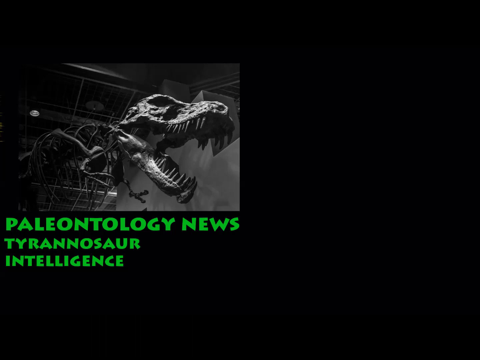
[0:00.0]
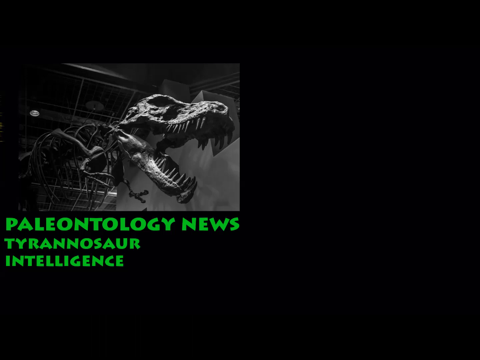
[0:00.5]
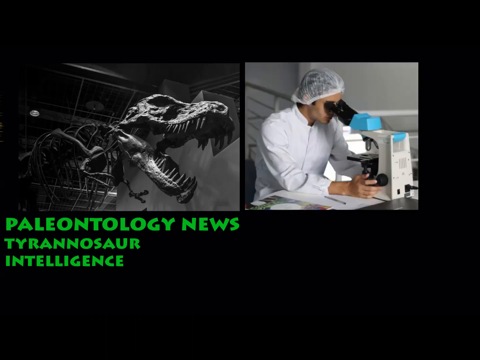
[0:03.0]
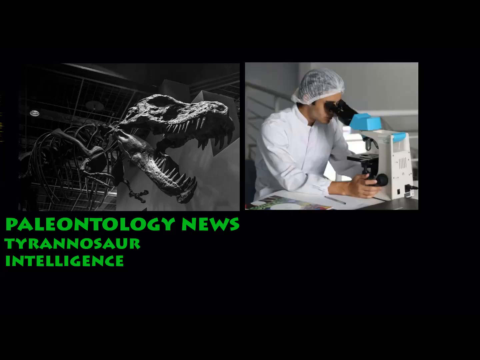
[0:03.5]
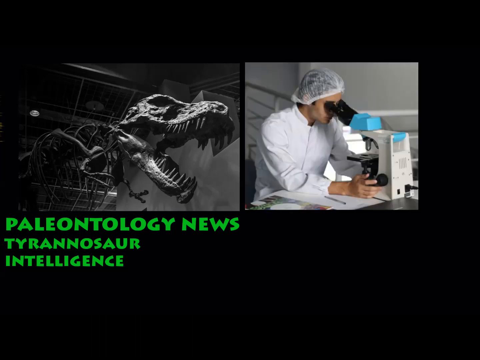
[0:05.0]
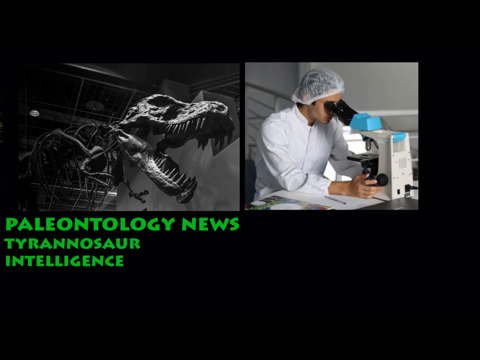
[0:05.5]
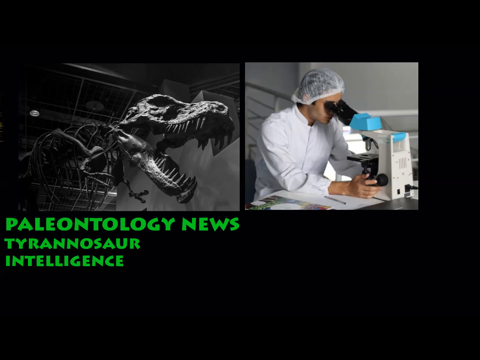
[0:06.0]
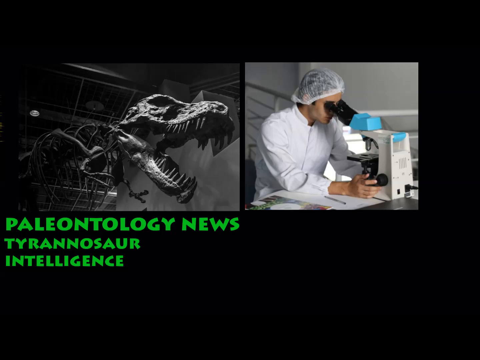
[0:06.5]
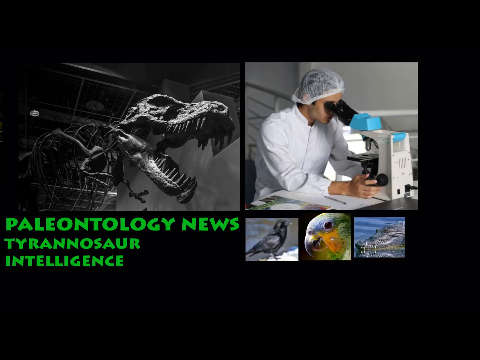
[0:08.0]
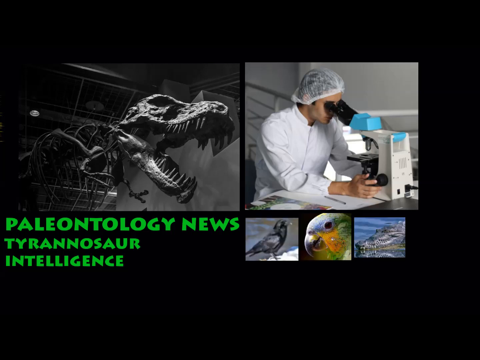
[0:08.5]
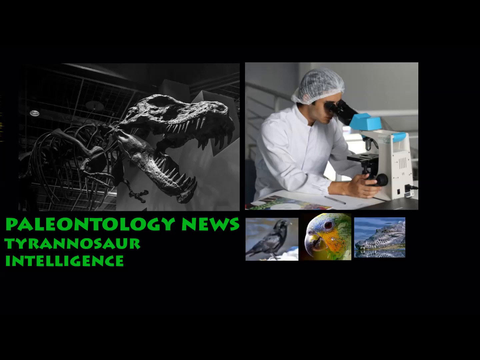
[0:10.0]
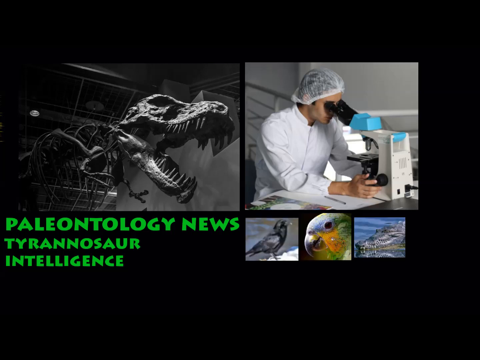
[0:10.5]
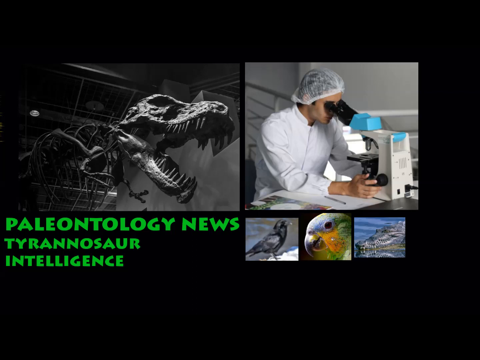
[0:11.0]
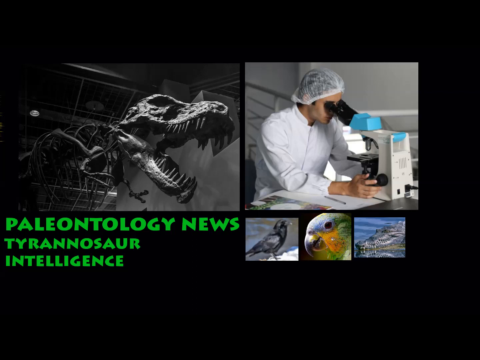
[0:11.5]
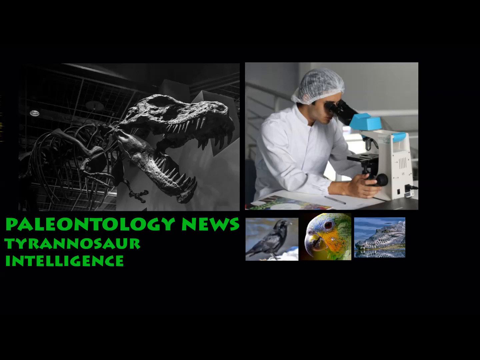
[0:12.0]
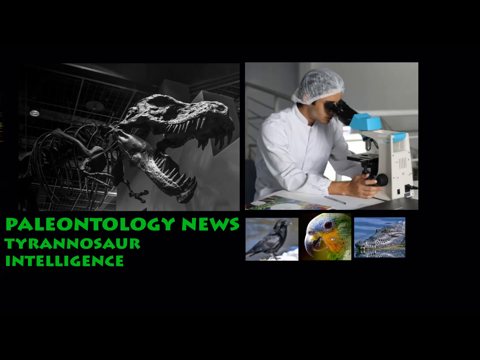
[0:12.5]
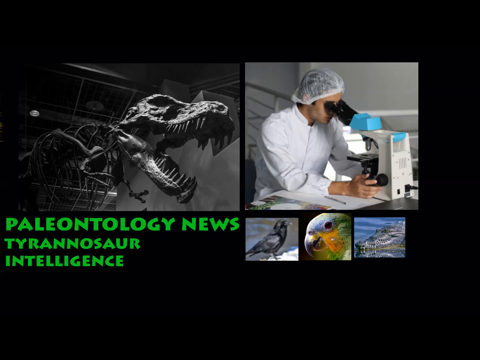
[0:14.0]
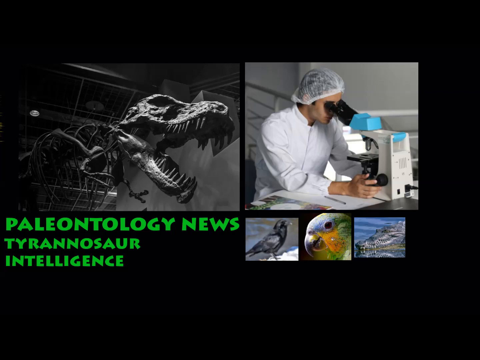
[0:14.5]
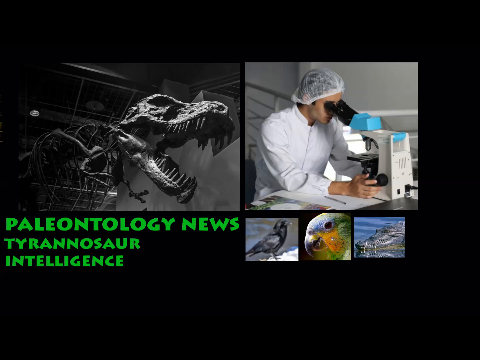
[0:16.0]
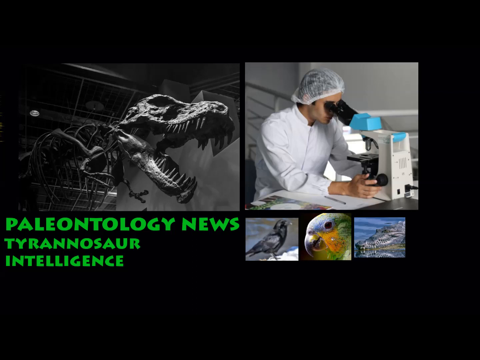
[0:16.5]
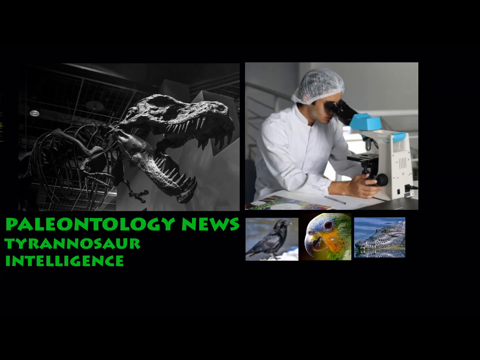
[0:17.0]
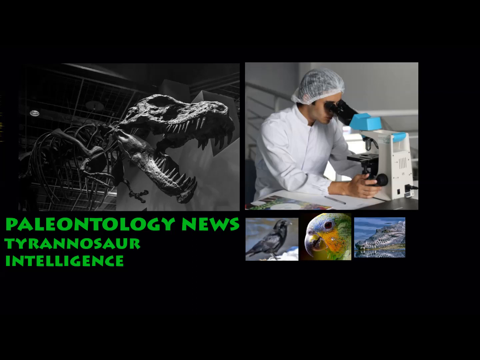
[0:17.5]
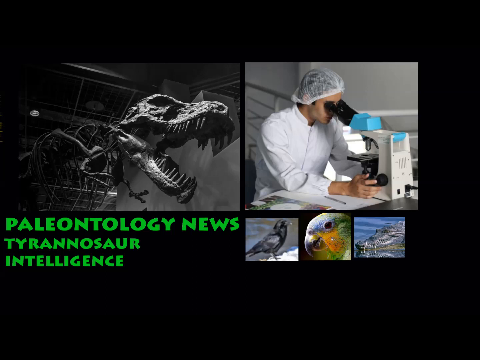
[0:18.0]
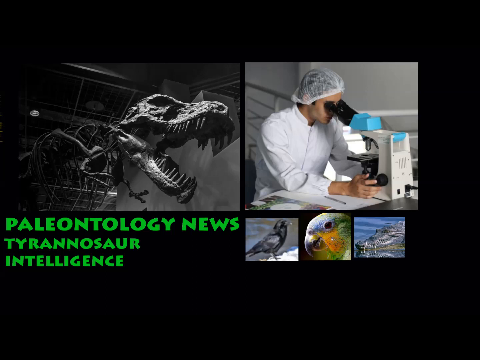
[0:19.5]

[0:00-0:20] The video begins with a black-and-white photo of a dinosaur on the left side of the screen, with green text underneath reading "Paleontology News, Tyrannosaur Intelligence." In the top right corner, a scientist is seated at a desk looking through a microscope; he wears a white button-down shirt and a hairnet over his head. Three small thumbnail clips then appear: a bird, a close-up of a parrot, and a hippopotamus in the water. The shot ends with the picture of the Tyrannosaur skeleton in the top left corner.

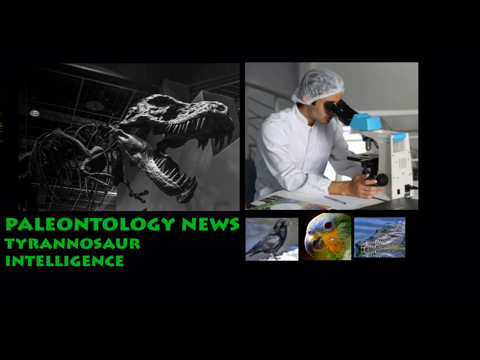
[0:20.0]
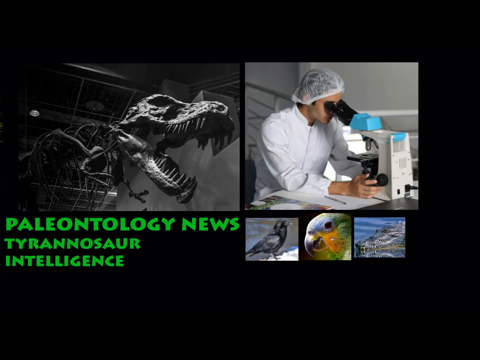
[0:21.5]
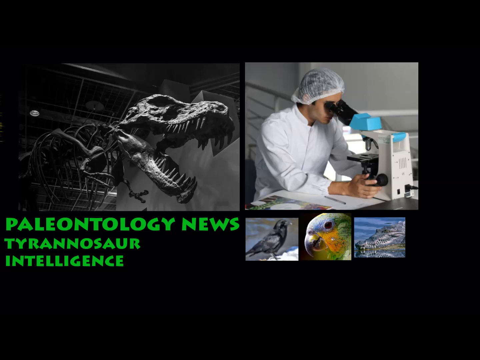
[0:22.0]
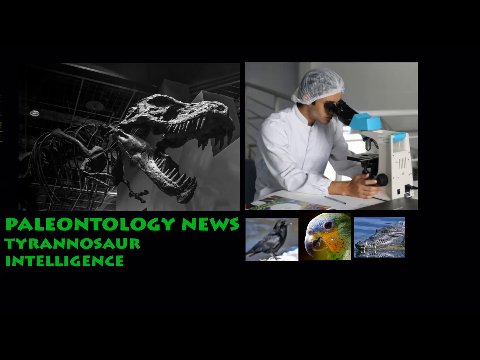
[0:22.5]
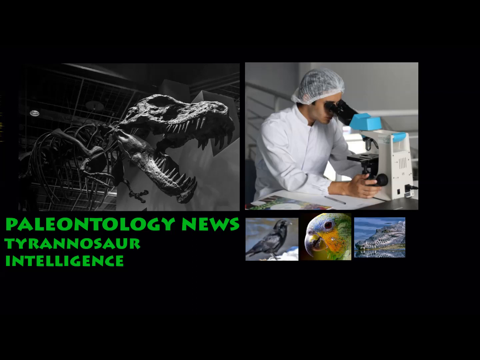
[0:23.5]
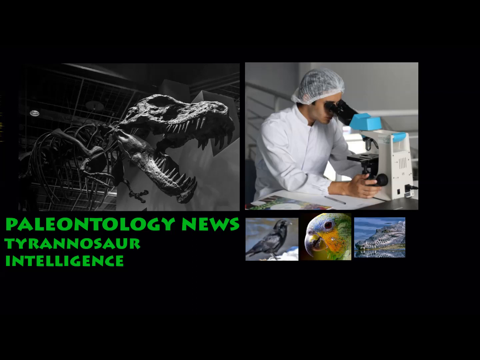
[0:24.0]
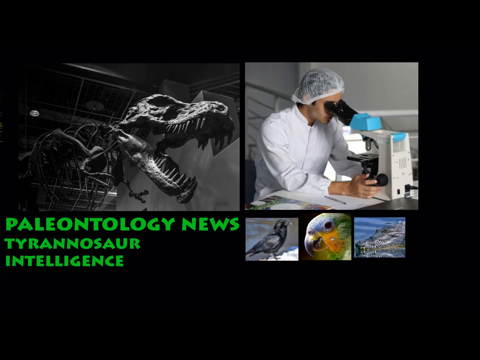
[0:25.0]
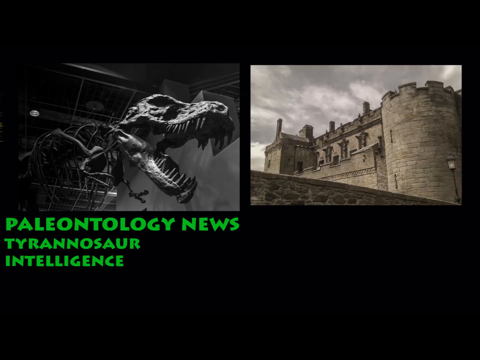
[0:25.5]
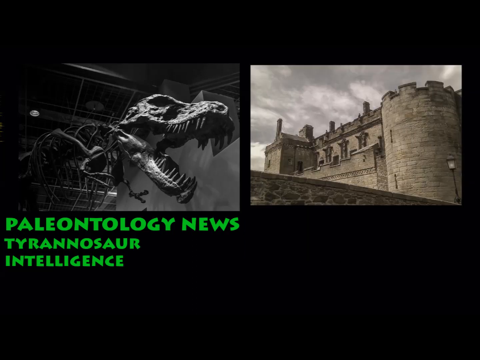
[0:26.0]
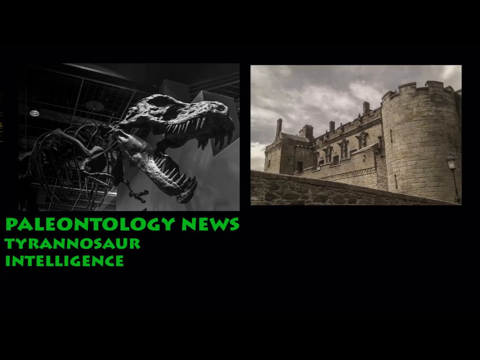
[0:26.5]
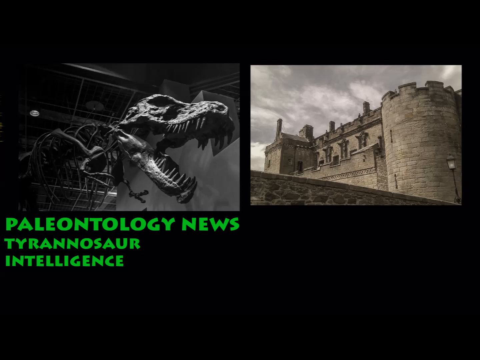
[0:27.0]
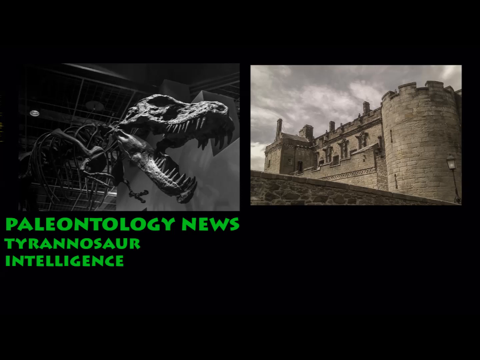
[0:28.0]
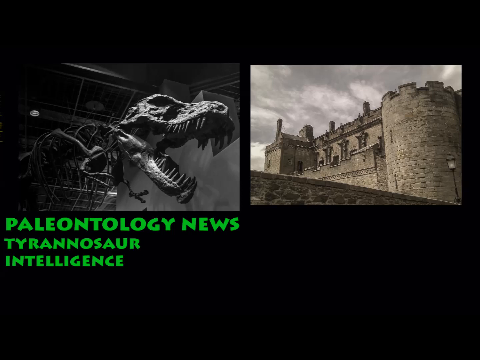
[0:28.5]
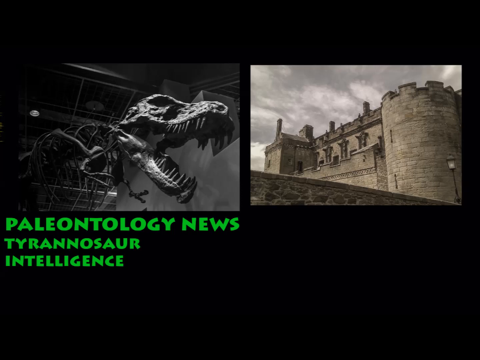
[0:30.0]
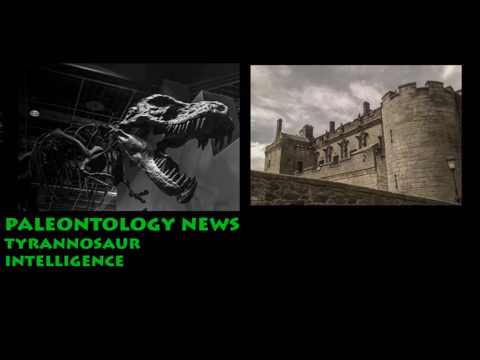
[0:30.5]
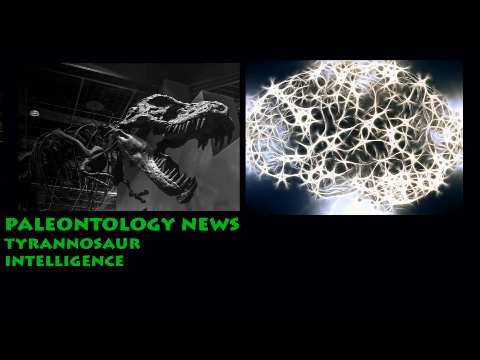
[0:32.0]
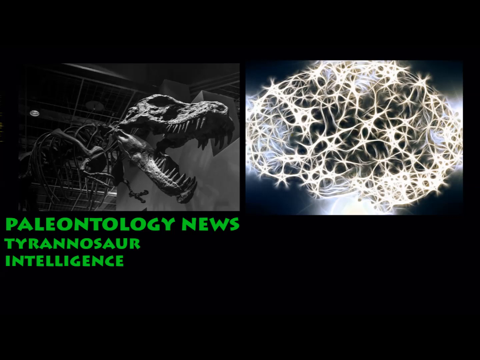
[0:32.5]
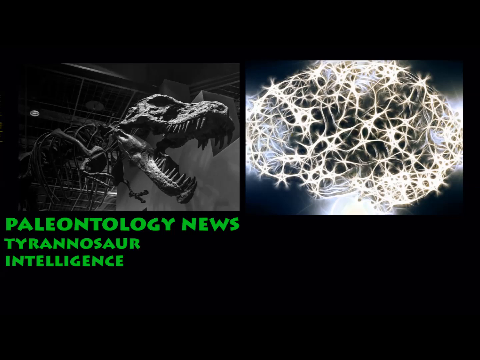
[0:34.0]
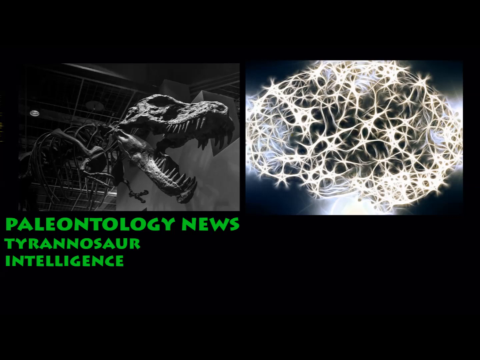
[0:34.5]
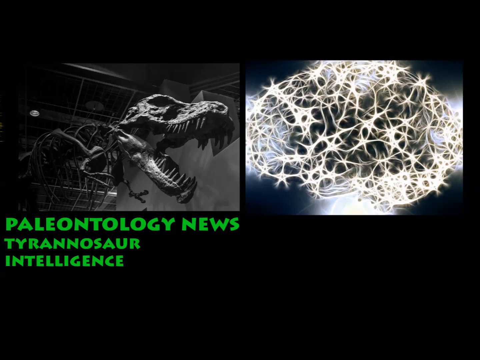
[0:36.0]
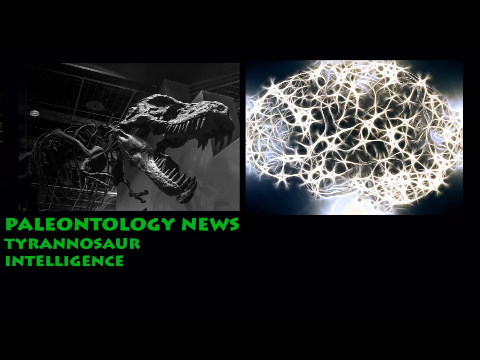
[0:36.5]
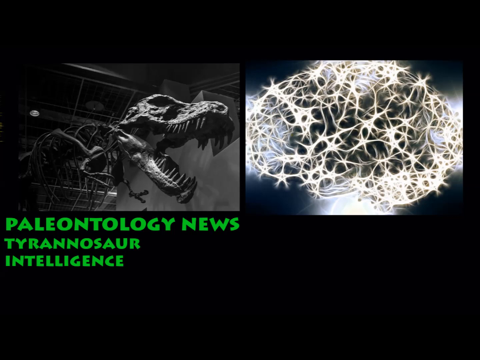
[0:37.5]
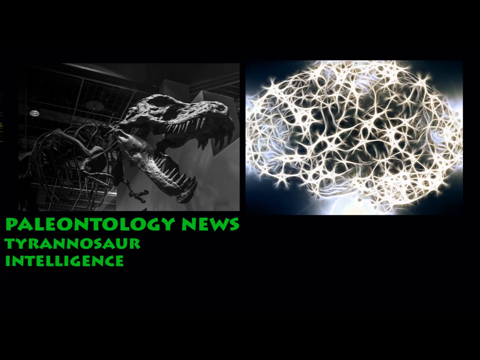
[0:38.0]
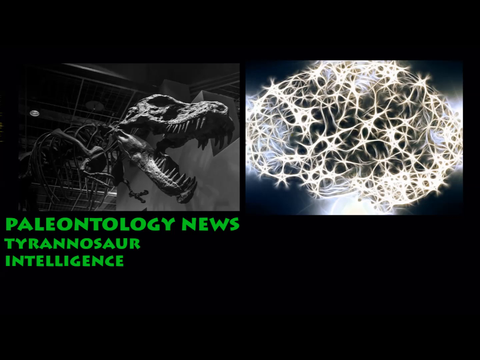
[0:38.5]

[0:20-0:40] The text "Paleontology News, Tyrannosaur Intelligence" appears with a black-and-white picture of a tyrannosaur skeleton, showing its head and part of its body. To the right is a photograph of a scientist in a white button-down shirt, his head covered in a hairnet, peering intently into a microscope. Underneath the scientist are three thumbnail clips: a bird in black and white, a parrot in color, and a hippopotamus in color, swimming. In the top right corner, the picture of the scientist and the three thumbnails are then replaced by a color photo of a medieval castle with gray clouds over it. The castle picture is then replaced by a white net over an object; the net looks as if it has stars entwined into the rope.